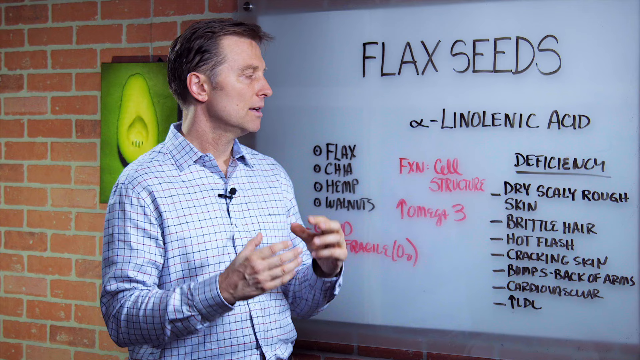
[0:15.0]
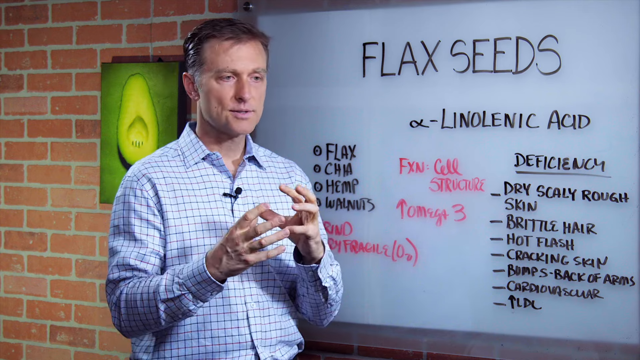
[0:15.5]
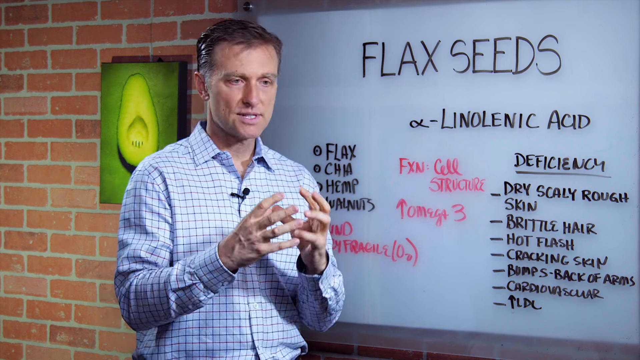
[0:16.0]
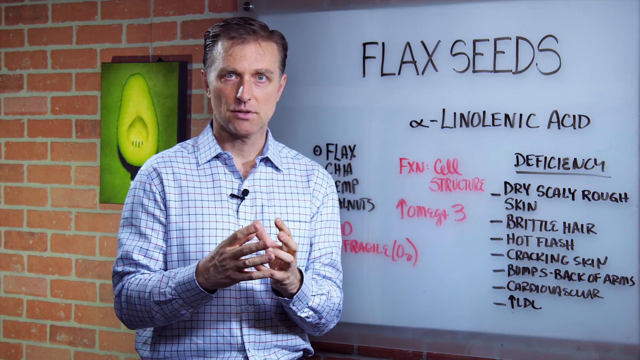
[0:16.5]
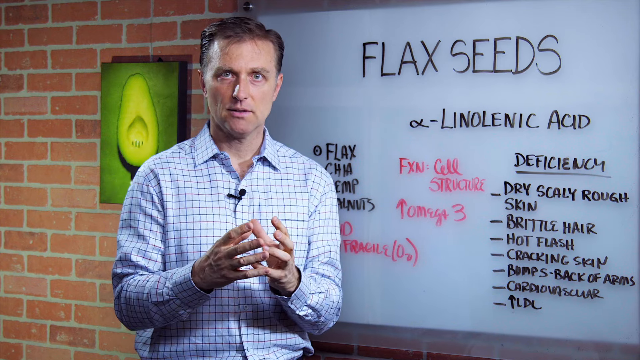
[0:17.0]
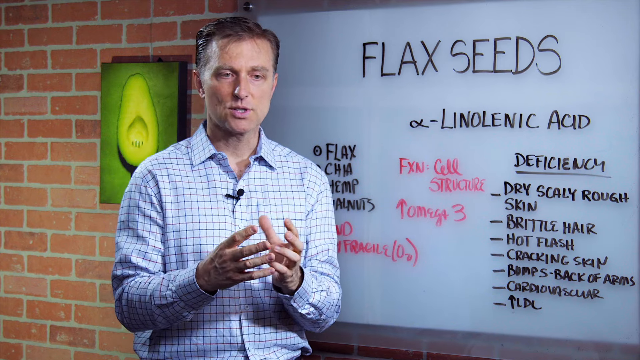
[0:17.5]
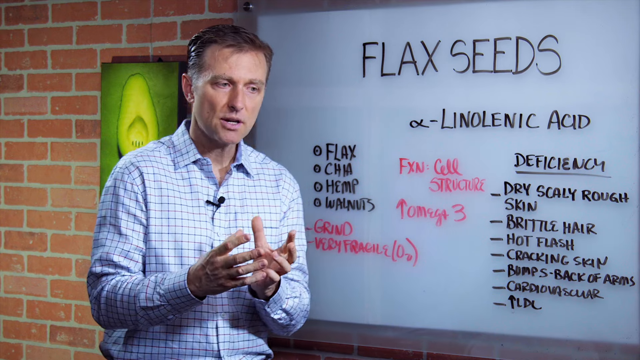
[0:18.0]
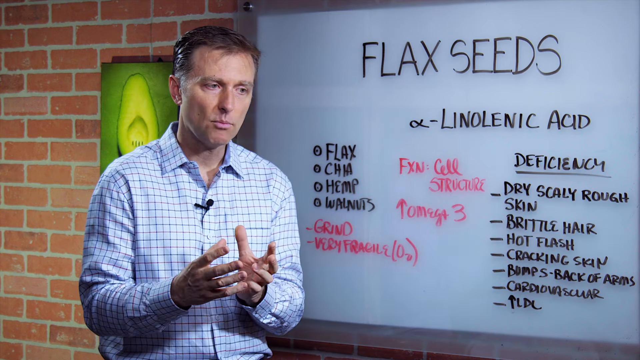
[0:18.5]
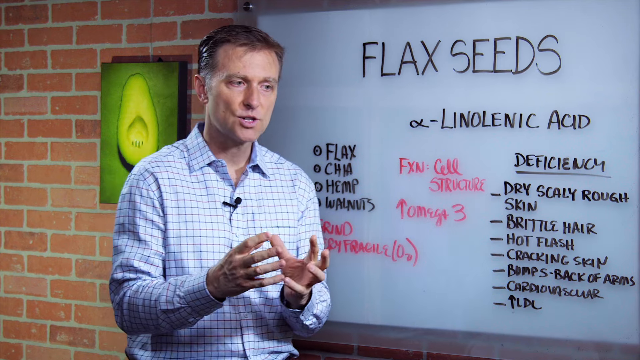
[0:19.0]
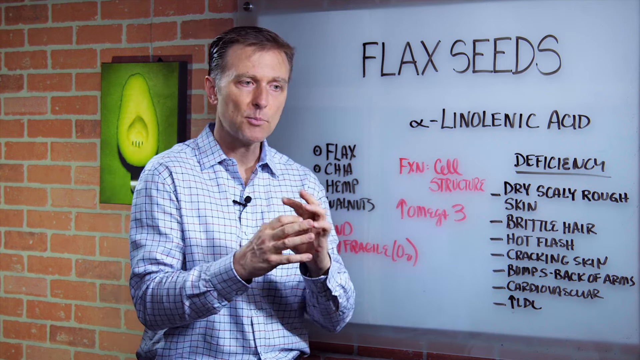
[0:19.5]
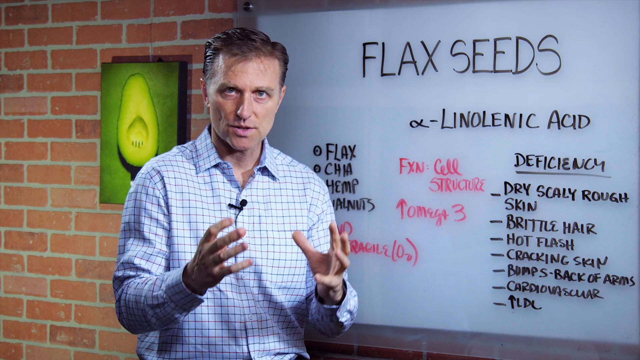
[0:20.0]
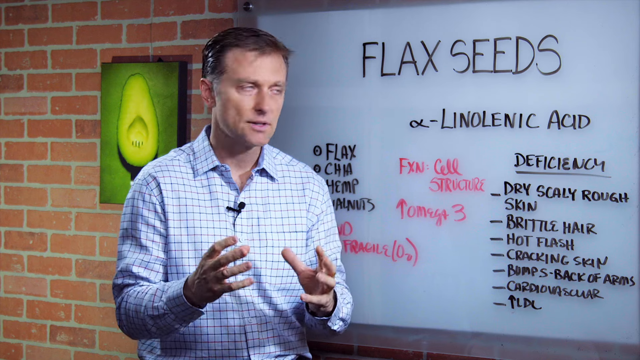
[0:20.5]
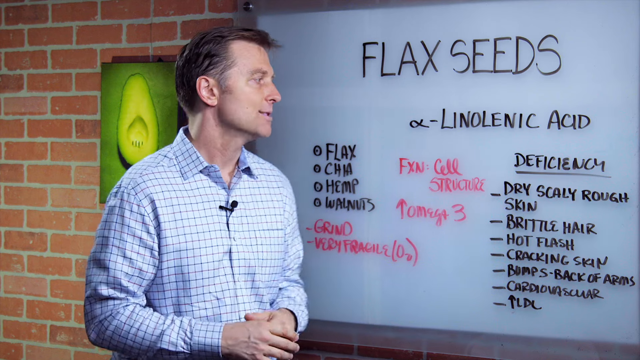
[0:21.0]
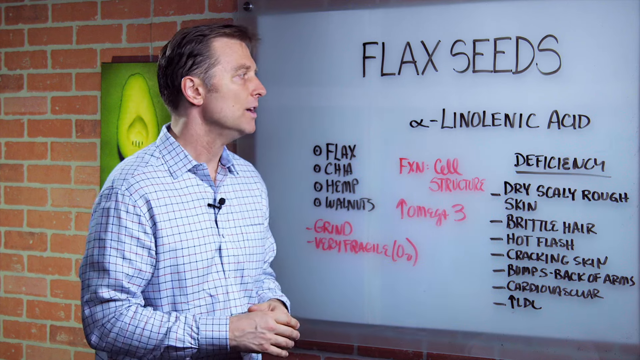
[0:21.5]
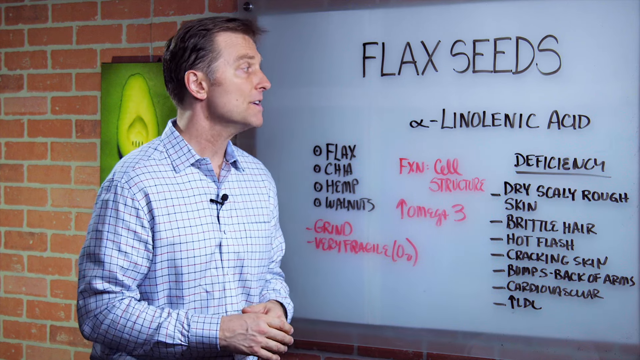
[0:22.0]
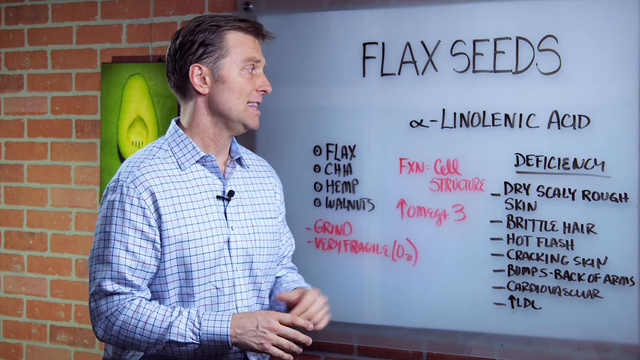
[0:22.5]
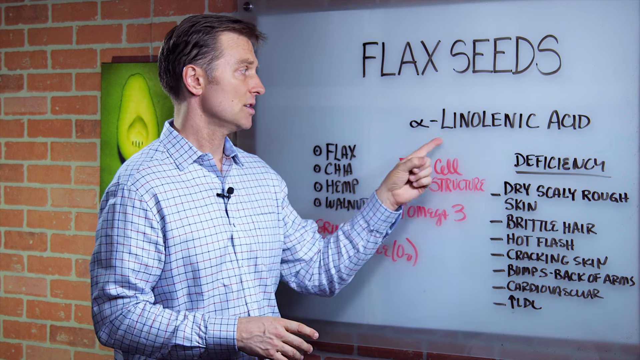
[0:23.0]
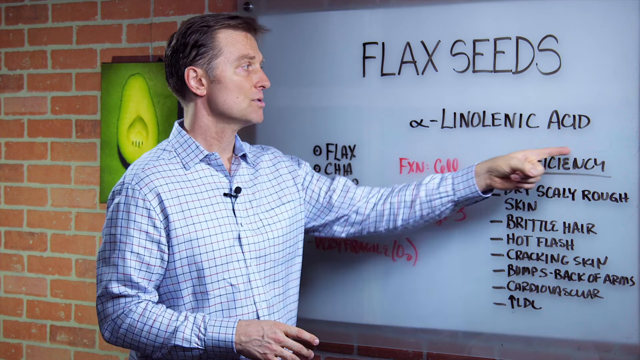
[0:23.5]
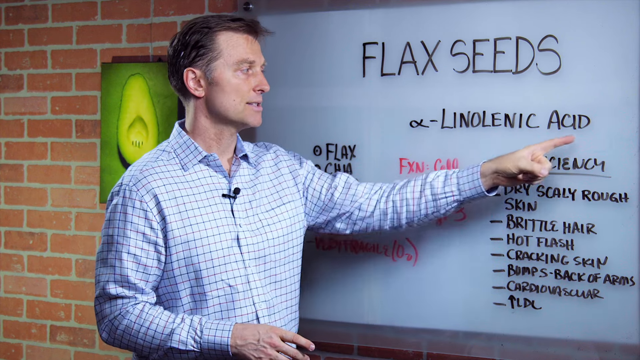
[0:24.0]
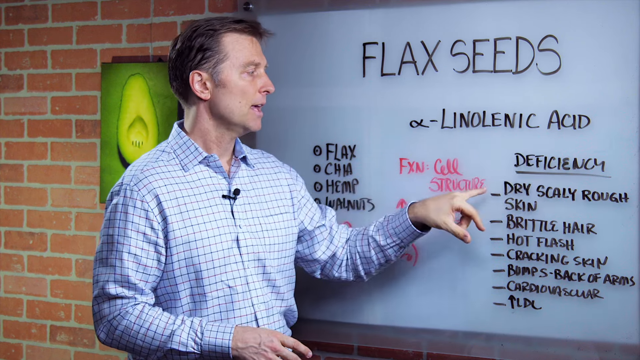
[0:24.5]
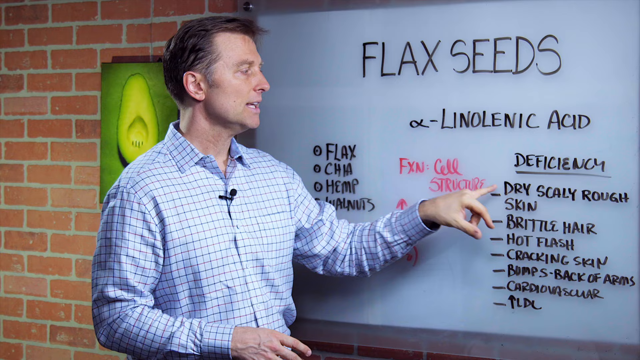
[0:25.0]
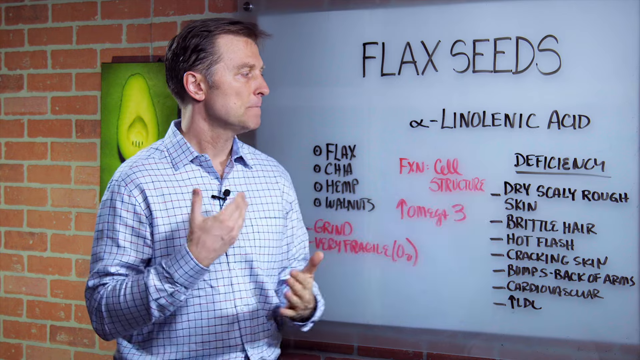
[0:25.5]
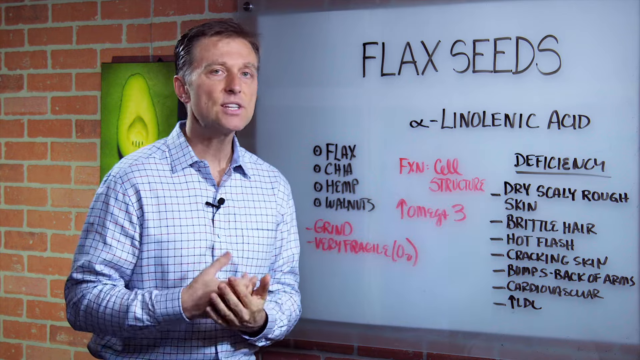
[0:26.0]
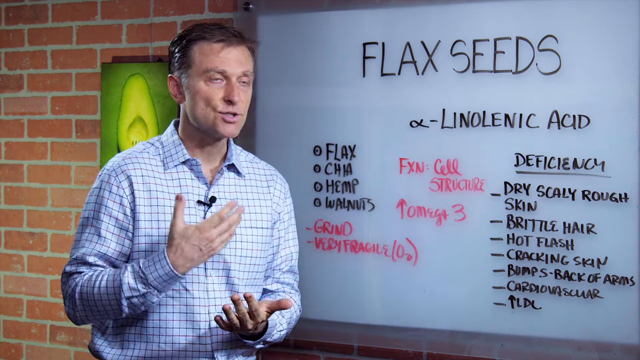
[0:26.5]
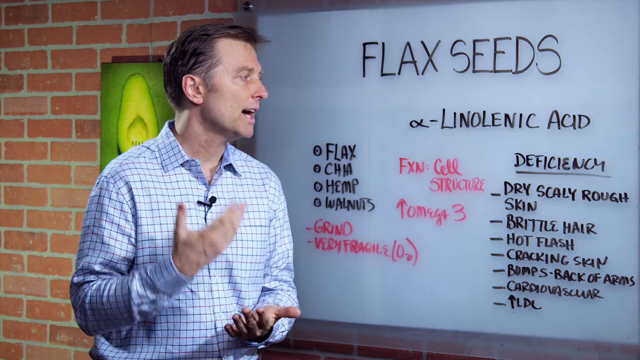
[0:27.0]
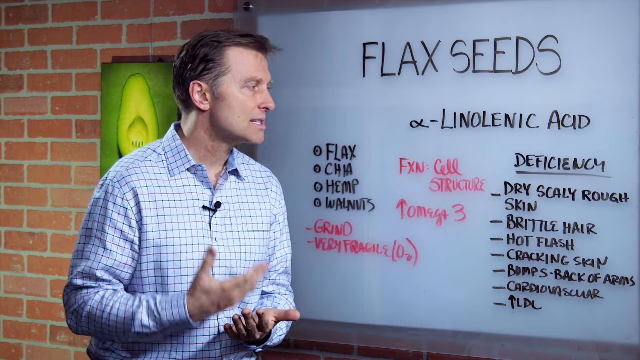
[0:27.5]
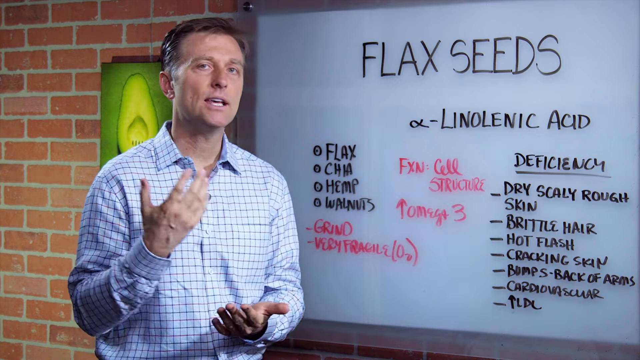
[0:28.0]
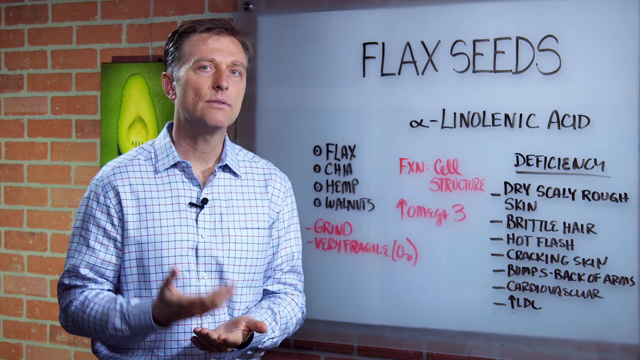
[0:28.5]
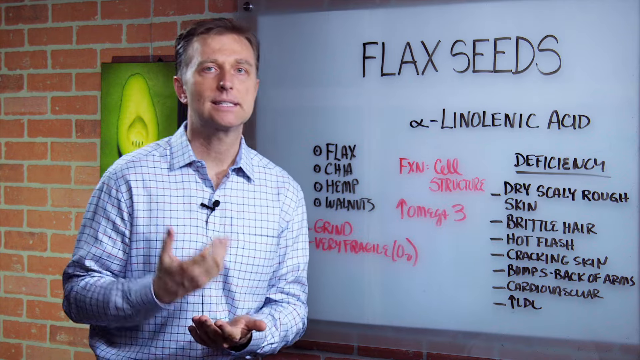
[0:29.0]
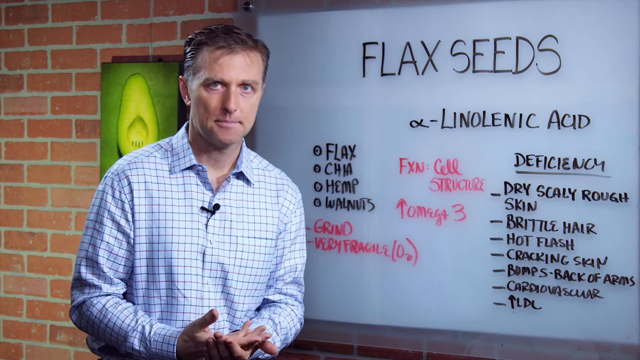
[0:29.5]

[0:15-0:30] A man in front of a whiteboard presents on flax seeds, which is written on the whiteboard in large capital letters as "flax seeds", with black writing underneath and some pink writing. He is very serious, emphasizing his presentation by clapping the back of one hand into the open palm of his other hand, and he forms a circular shape with his hands. He looks at the whiteboard and keeps pointing to and underlining the words with his index finger, looking at the audience and talking with his hands. He wears a blue and white checkered shirt with a black microphone attached. Behind him is a red brick wall with a large picture of what looks to be a seed, perhaps cut in half, showing the inside and a scooped-out part.